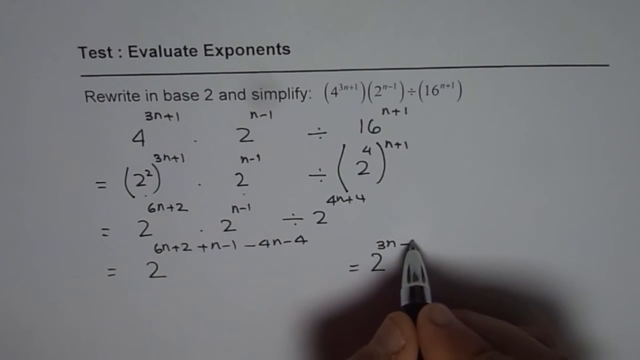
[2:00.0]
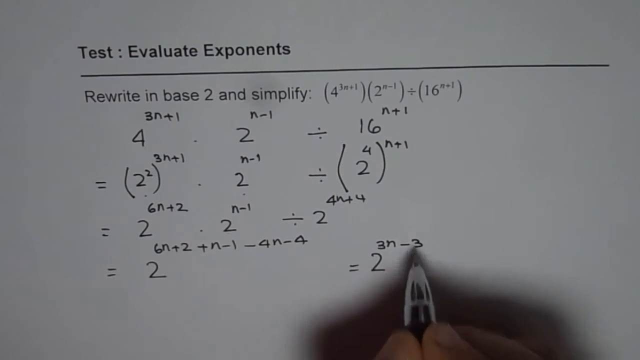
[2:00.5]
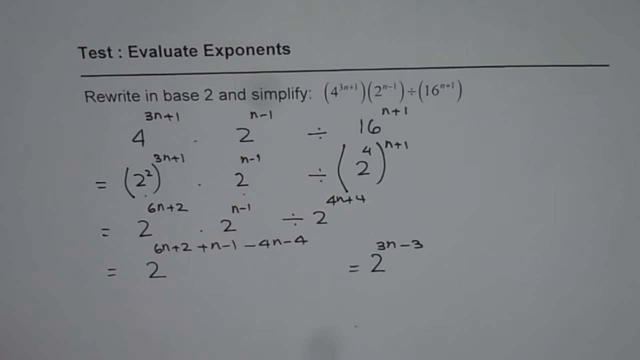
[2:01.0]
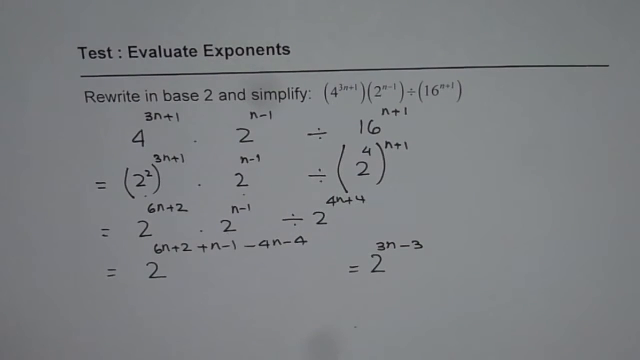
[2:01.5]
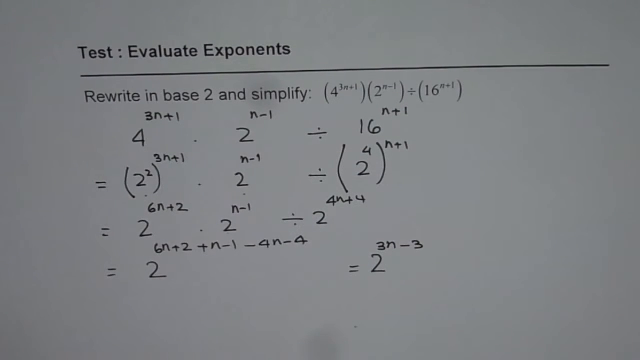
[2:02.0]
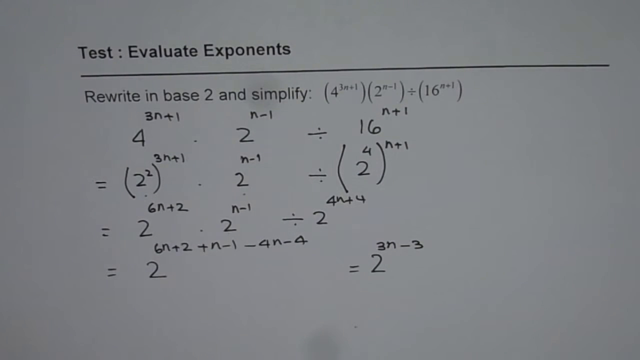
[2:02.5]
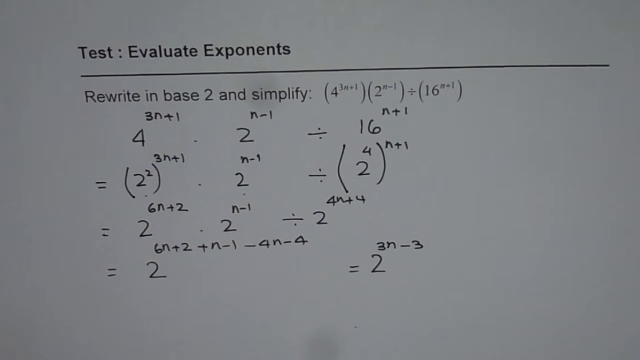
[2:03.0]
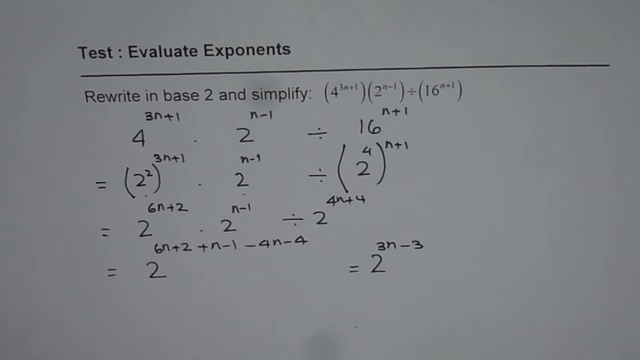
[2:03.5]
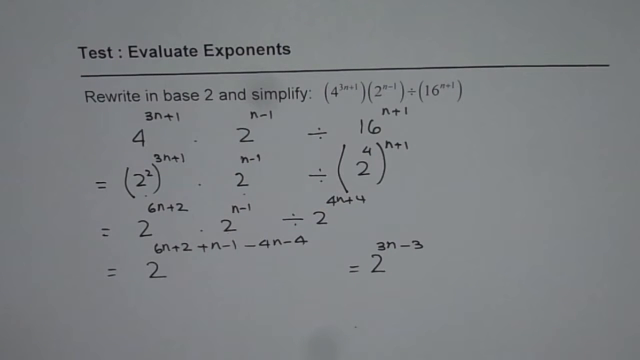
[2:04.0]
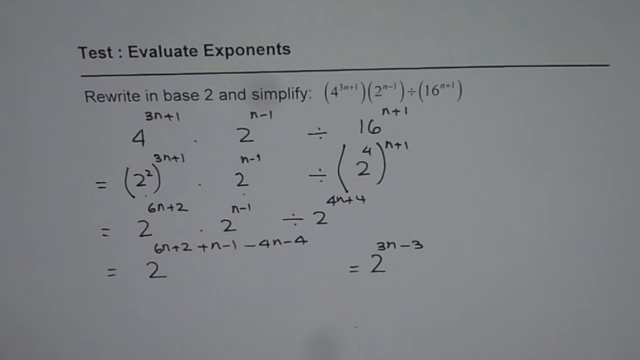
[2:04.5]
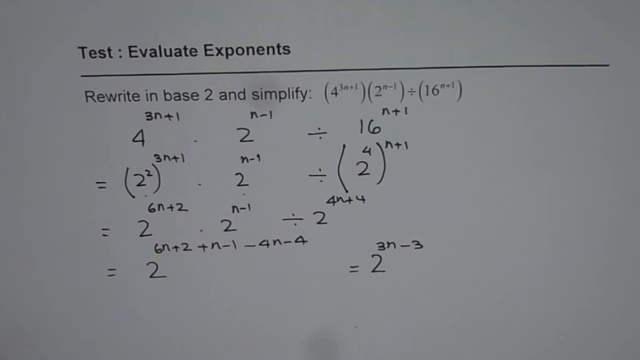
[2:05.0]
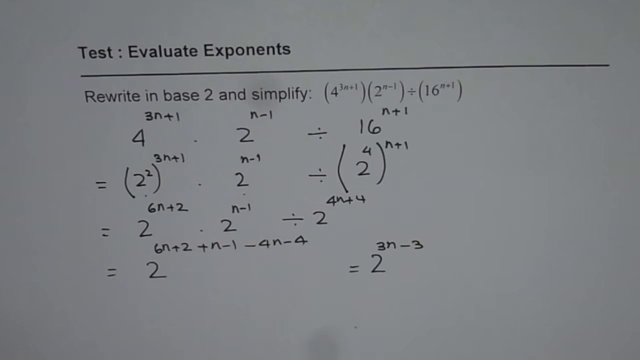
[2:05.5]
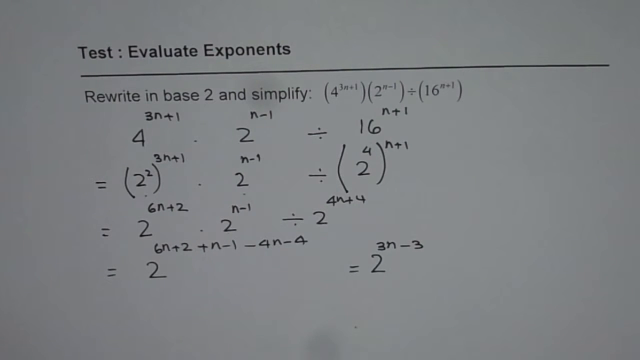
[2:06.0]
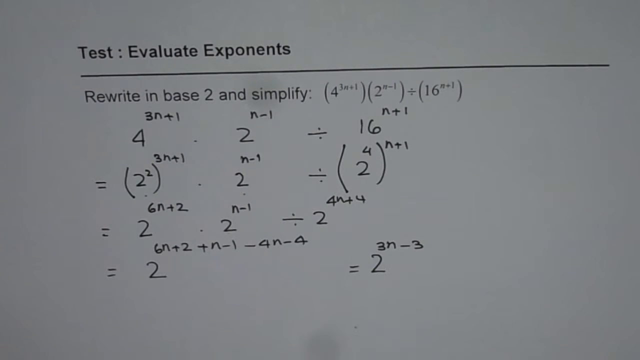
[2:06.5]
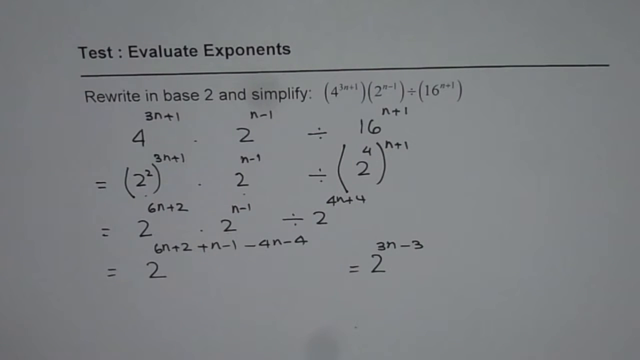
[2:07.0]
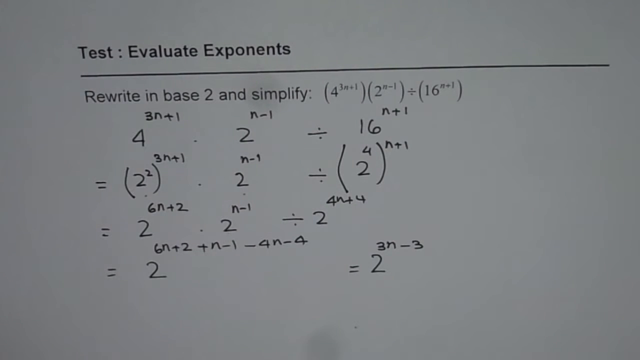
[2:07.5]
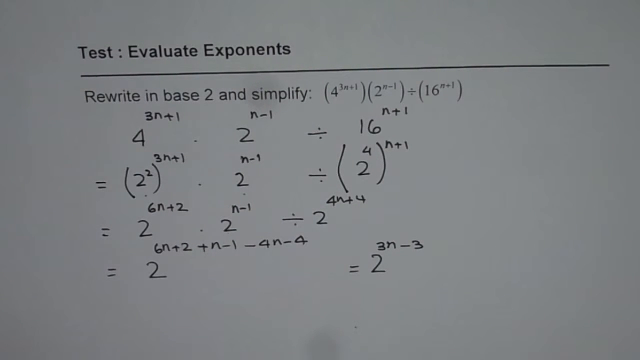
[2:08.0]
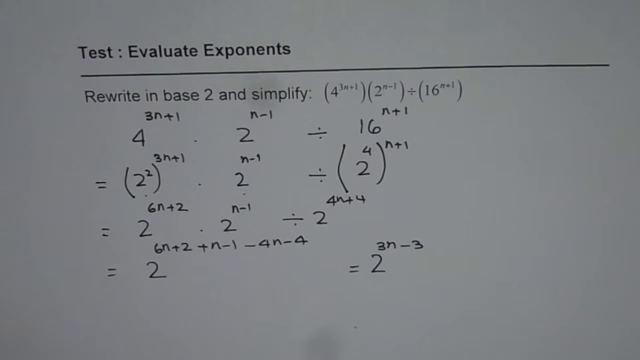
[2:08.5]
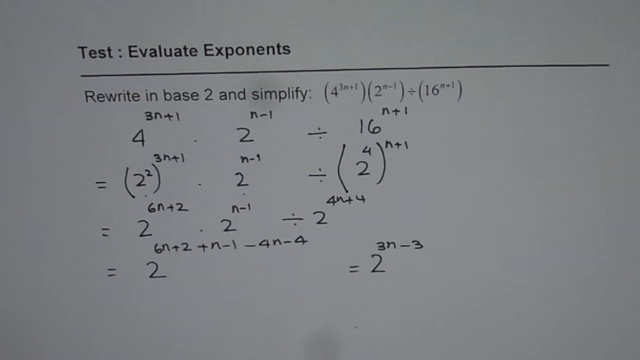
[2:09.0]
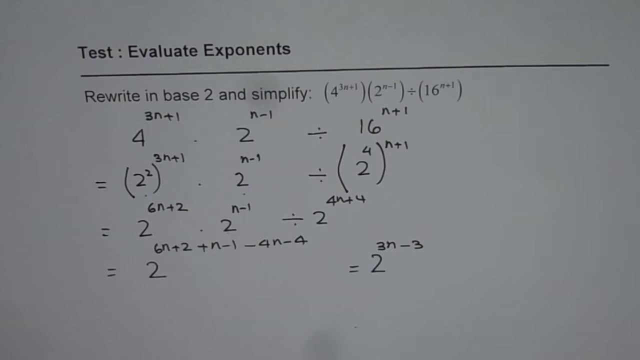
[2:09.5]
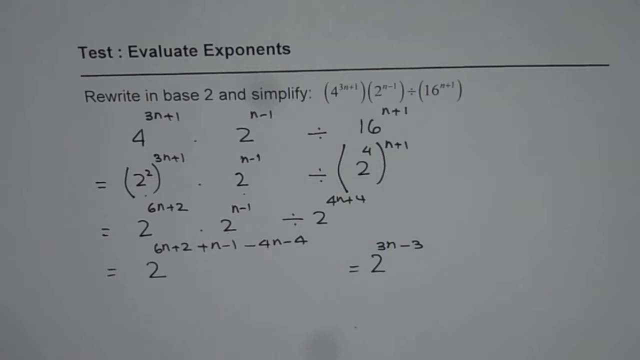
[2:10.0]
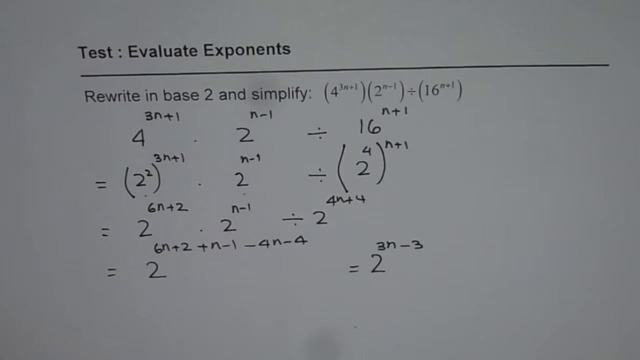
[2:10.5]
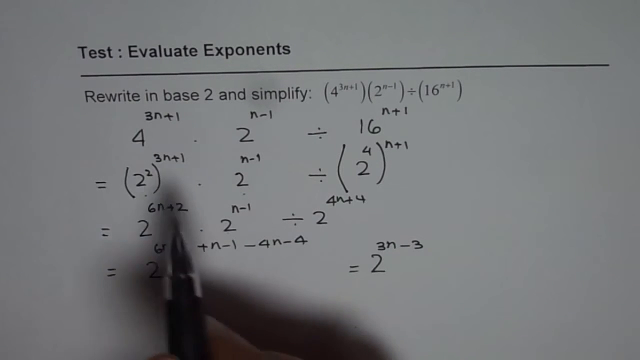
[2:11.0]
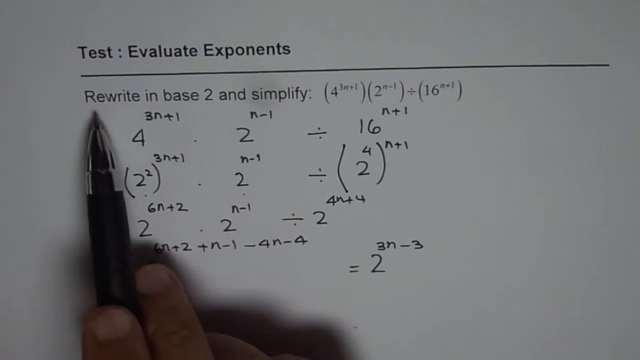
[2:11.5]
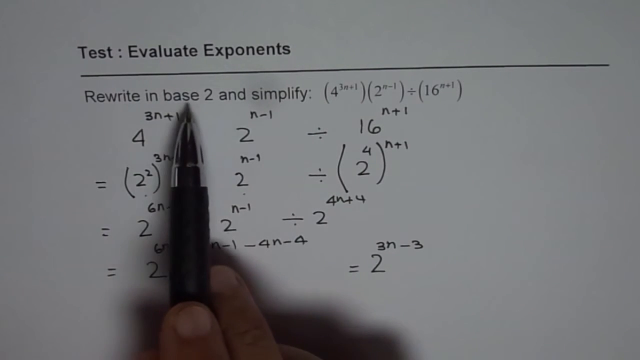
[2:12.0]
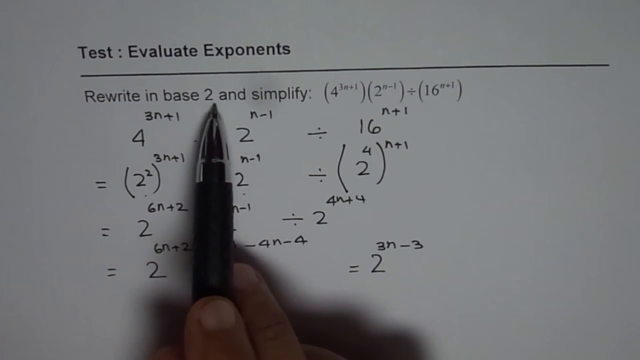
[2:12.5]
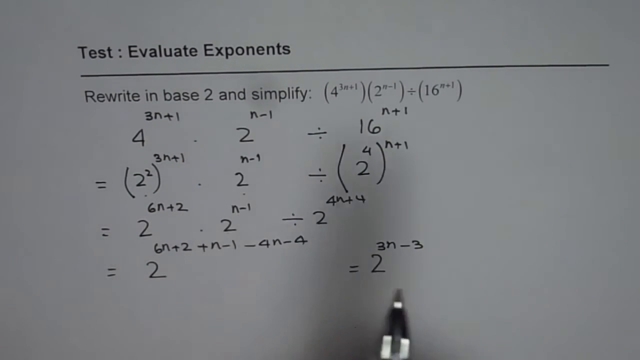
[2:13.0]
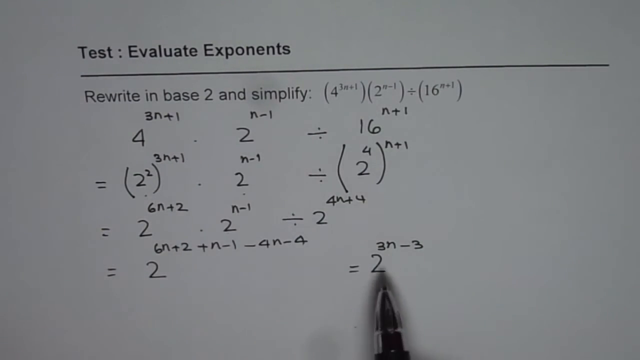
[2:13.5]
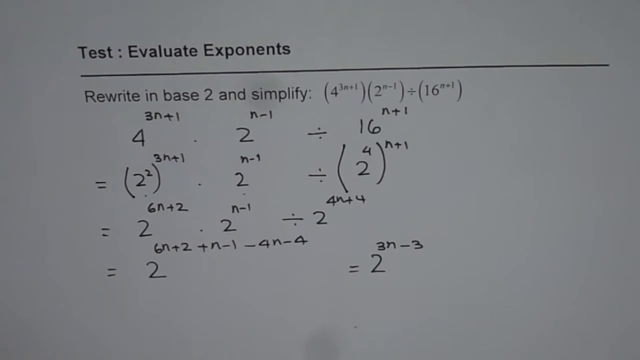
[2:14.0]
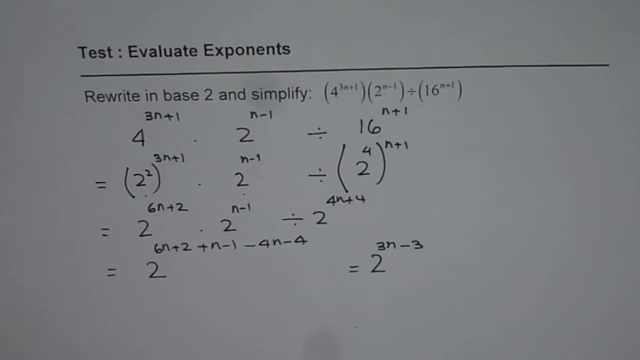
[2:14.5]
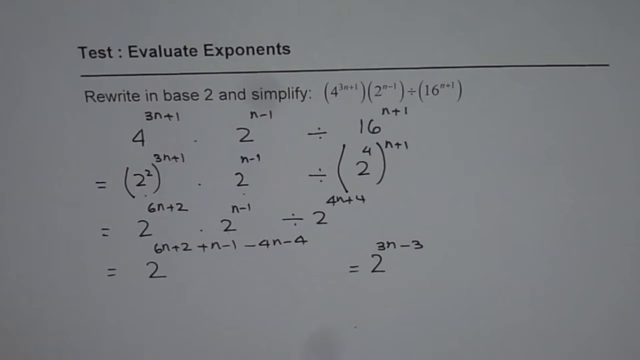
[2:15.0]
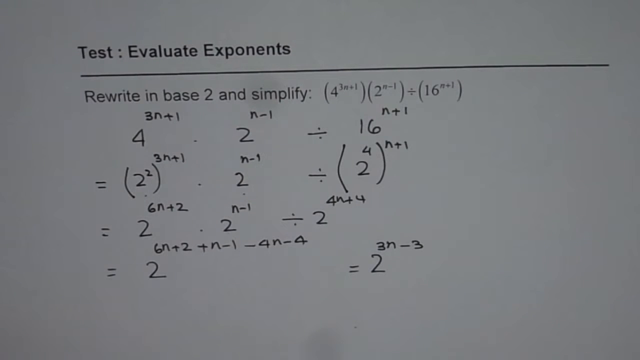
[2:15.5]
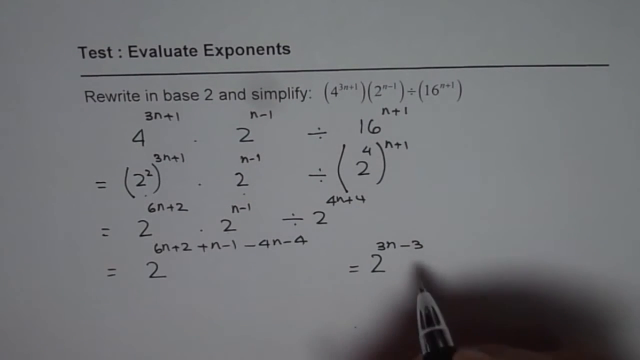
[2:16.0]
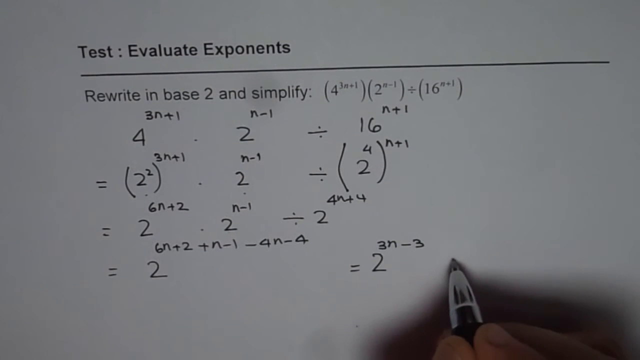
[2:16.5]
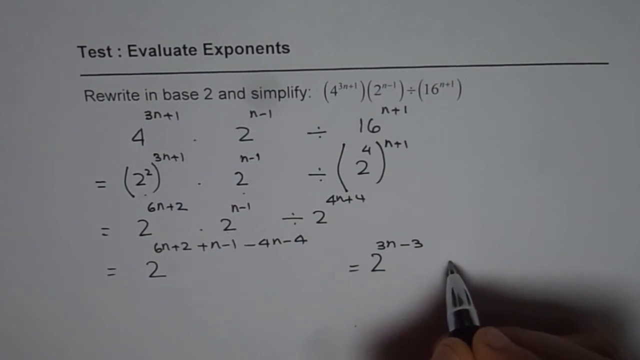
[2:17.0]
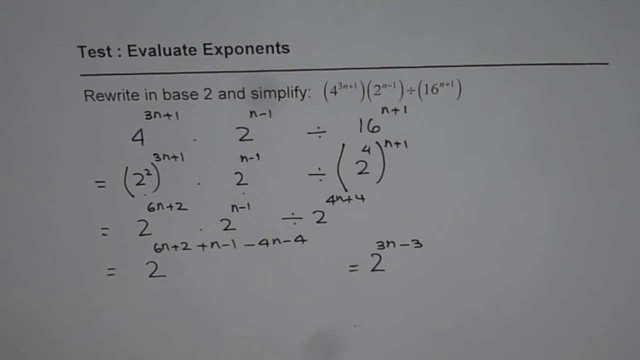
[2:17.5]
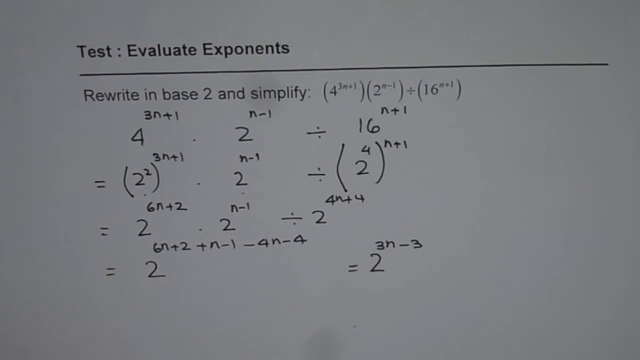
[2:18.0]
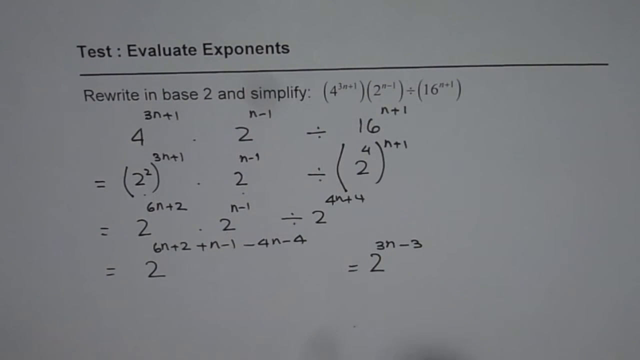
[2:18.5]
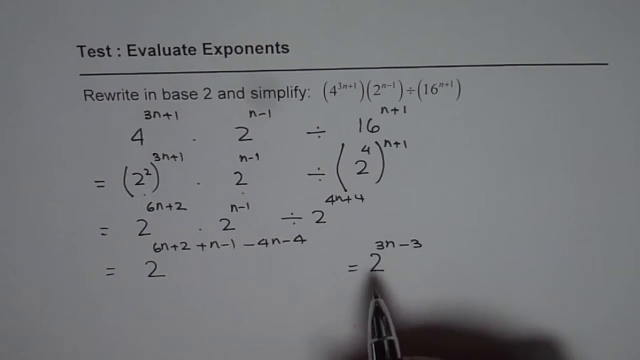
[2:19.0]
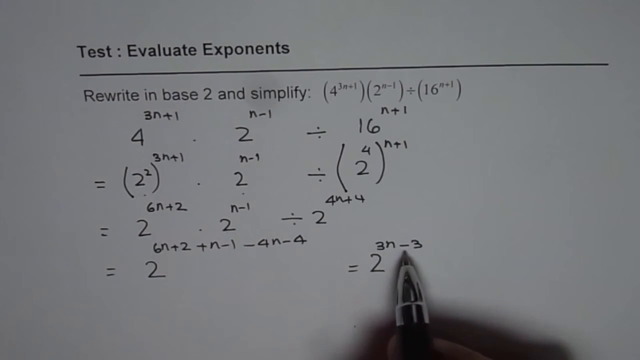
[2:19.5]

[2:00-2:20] A person holds a pen with their right hand; it is black with a silver tip. On a white piece of paper, bold black text at the top says "test evaluate exponent," with a black line across the paper below it and black text underneath saying "rewrite in base two and simplify," with an equation to the right. The person has already written four lines simplifying the equation. They use the pen to point at the part that says "rewrite in base 2 and simplify," then go back to the fourth line at the bottom of the screen and point at the exponents above the number 2. The fourth line starts with an equals sign, then a 2 with the exponent 6n + 2 + n − 1 − 4n − 4, then "= 2" with the exponent 3n − 3.